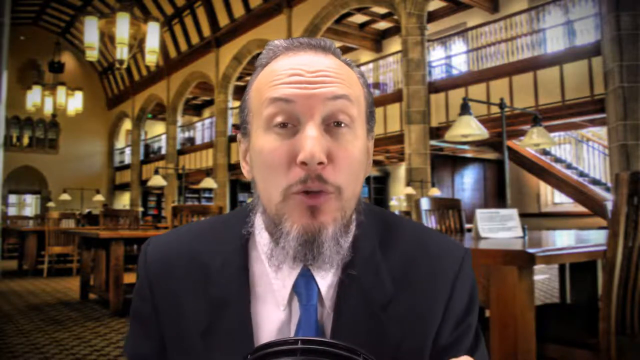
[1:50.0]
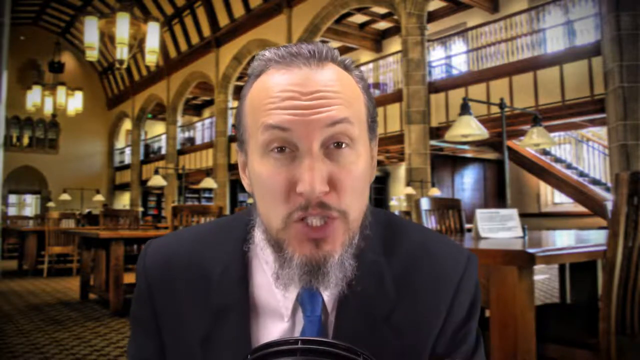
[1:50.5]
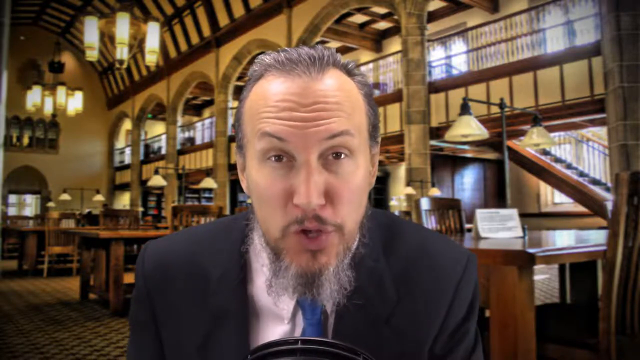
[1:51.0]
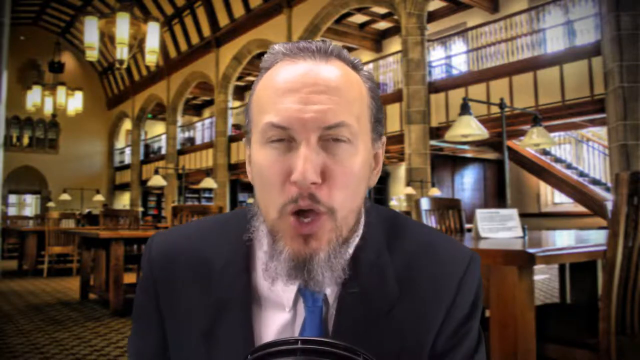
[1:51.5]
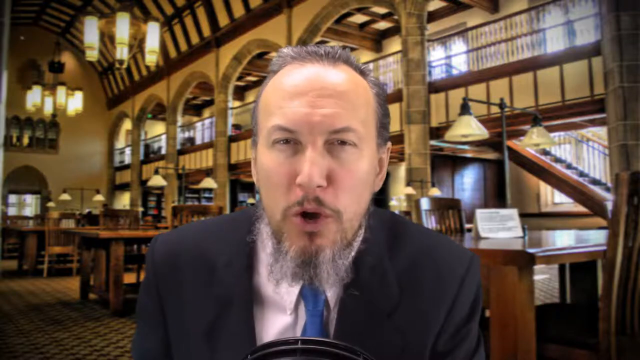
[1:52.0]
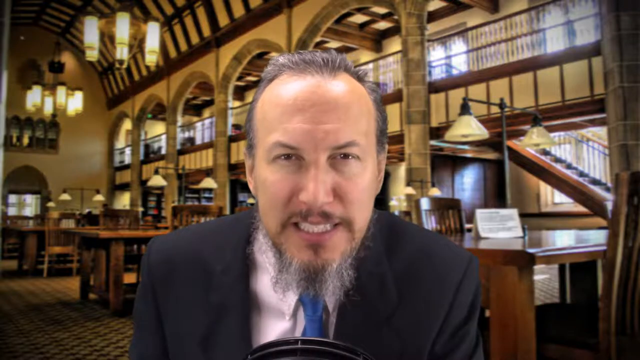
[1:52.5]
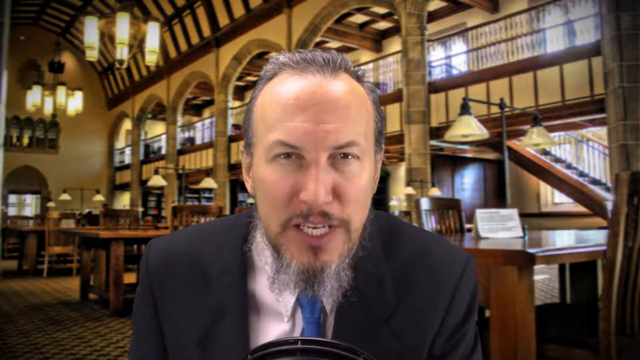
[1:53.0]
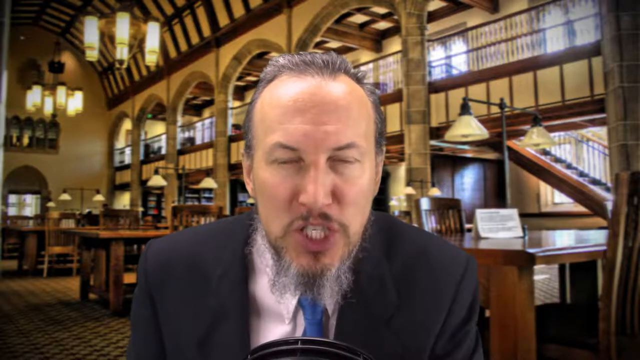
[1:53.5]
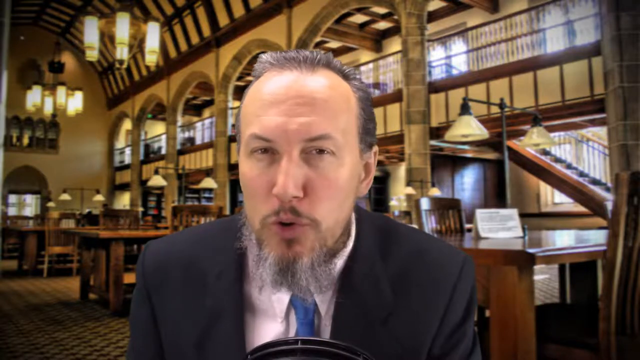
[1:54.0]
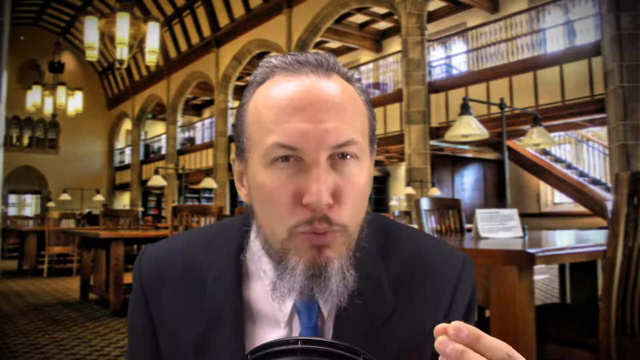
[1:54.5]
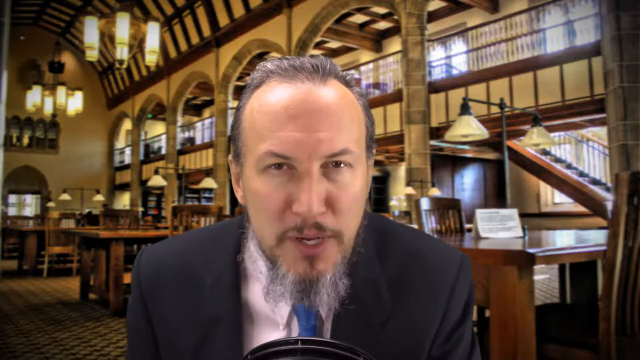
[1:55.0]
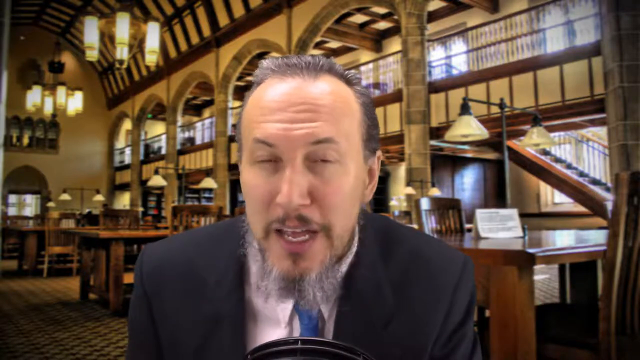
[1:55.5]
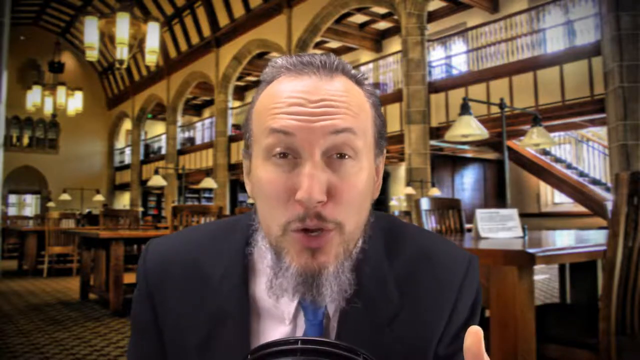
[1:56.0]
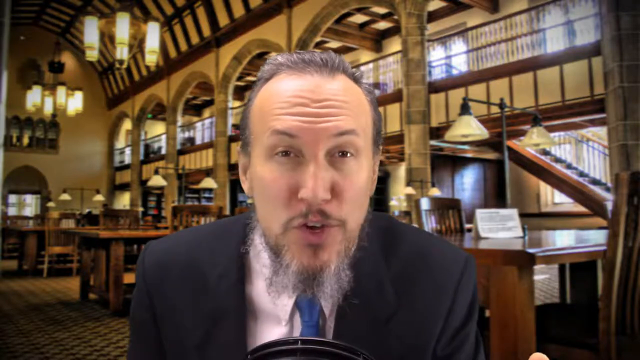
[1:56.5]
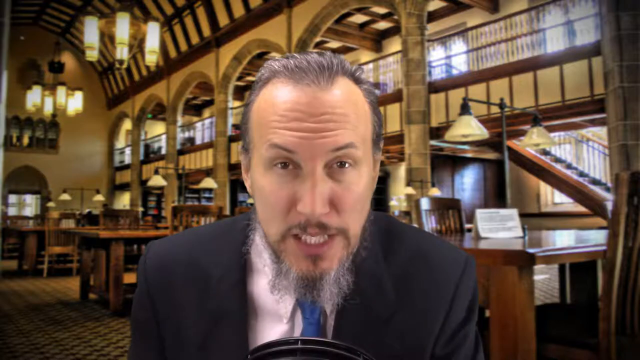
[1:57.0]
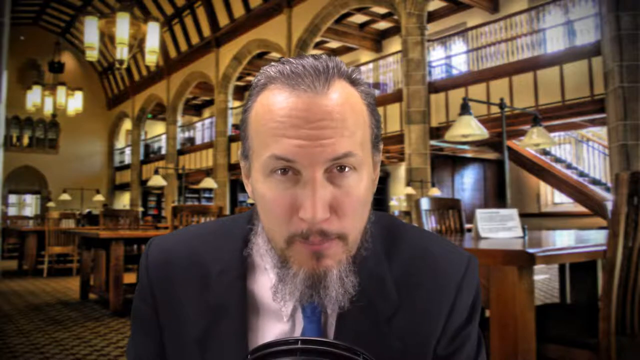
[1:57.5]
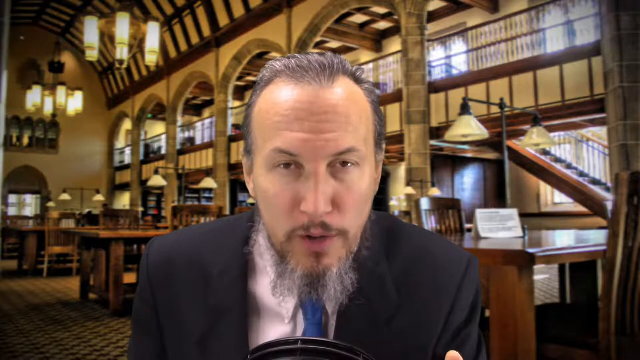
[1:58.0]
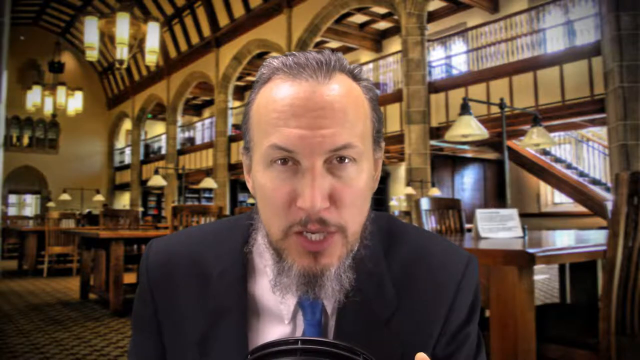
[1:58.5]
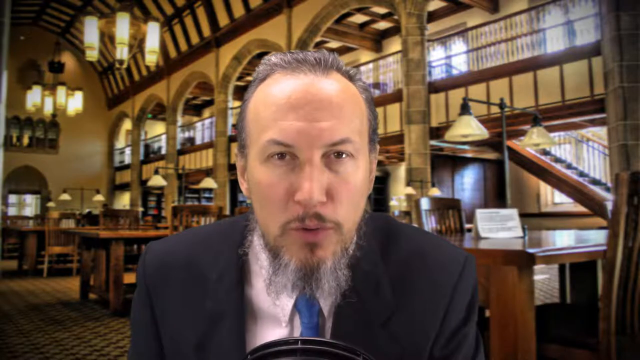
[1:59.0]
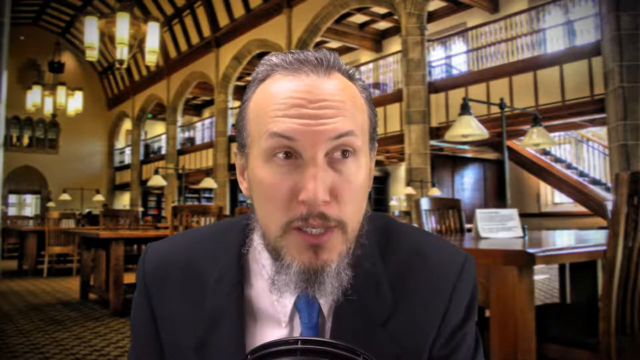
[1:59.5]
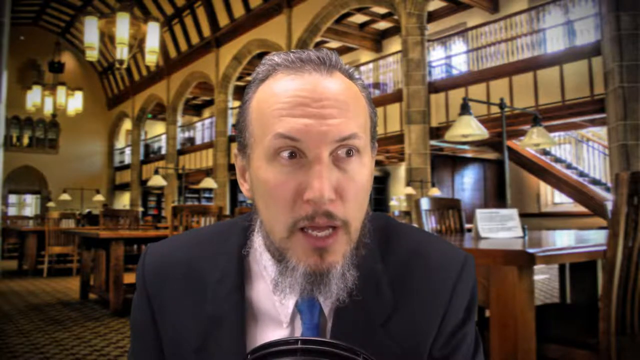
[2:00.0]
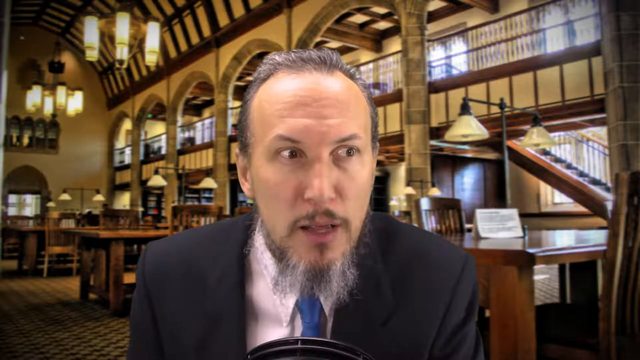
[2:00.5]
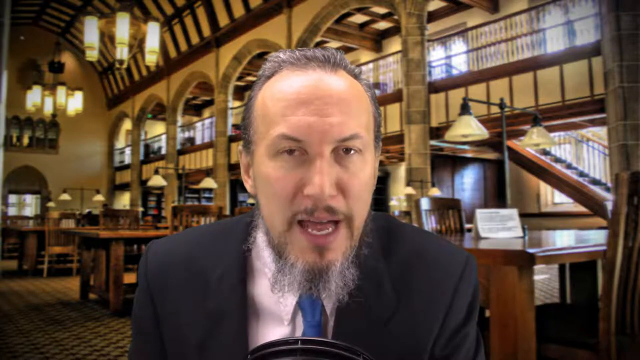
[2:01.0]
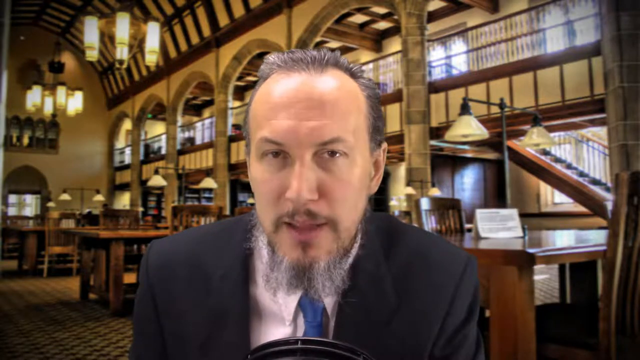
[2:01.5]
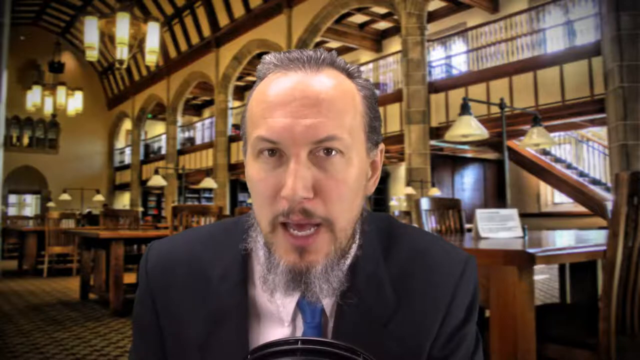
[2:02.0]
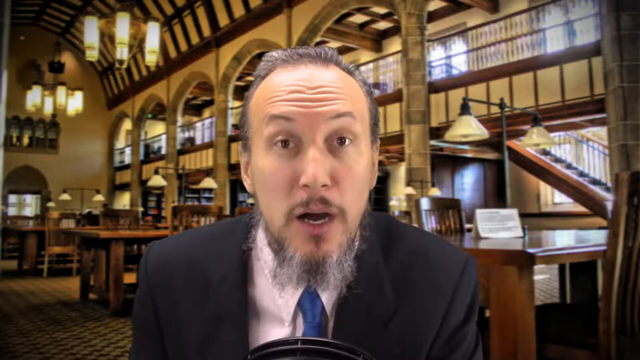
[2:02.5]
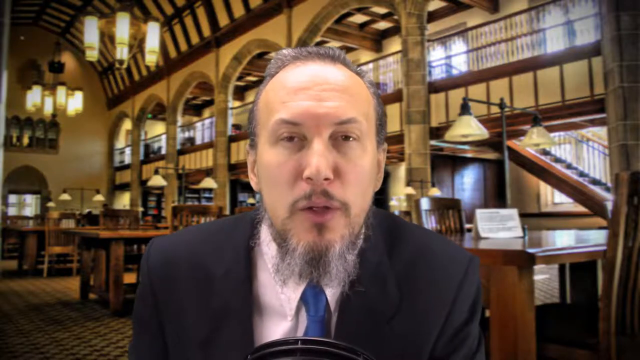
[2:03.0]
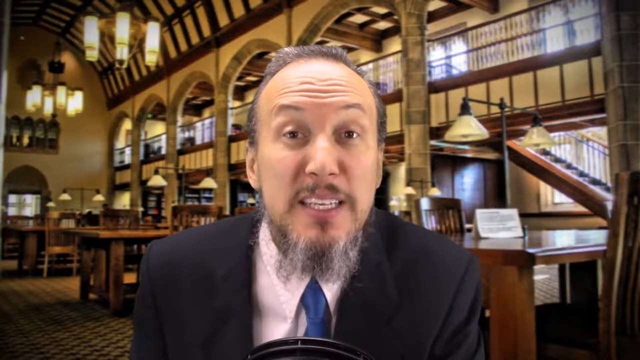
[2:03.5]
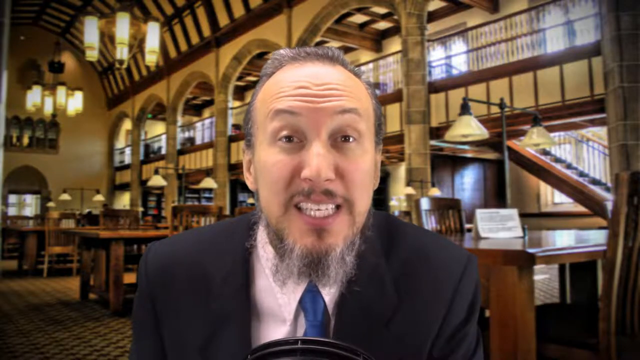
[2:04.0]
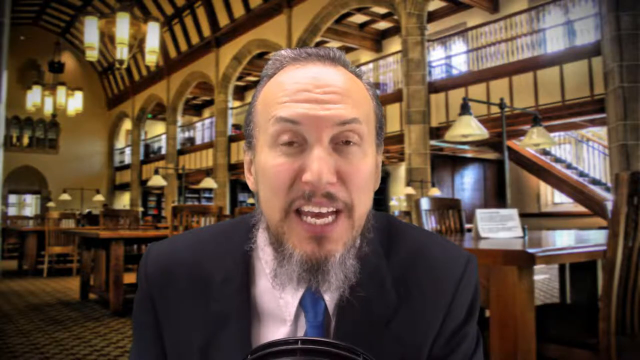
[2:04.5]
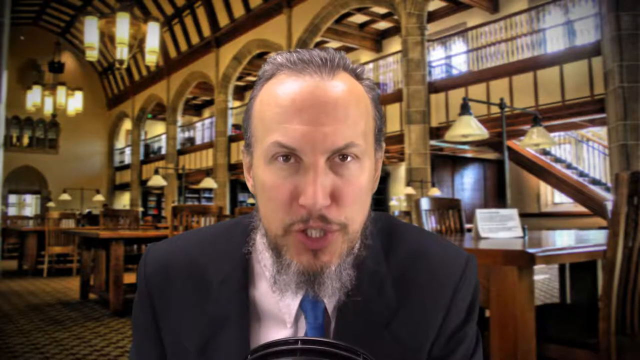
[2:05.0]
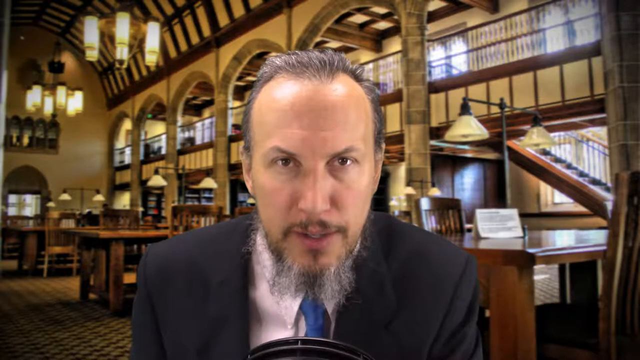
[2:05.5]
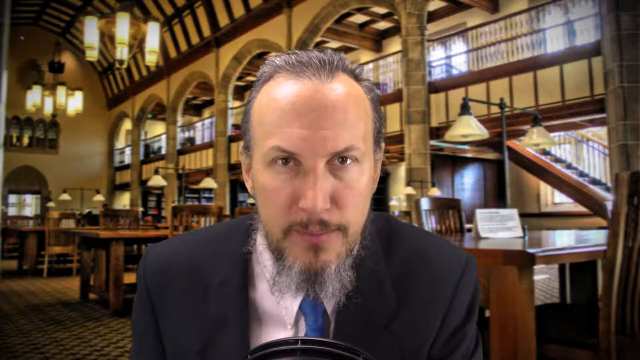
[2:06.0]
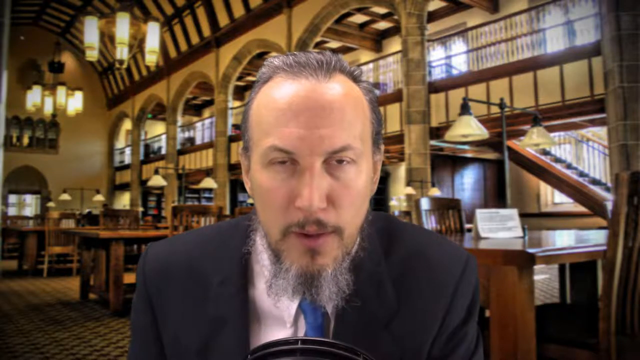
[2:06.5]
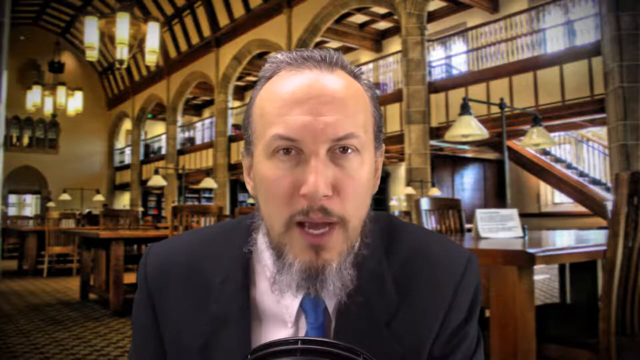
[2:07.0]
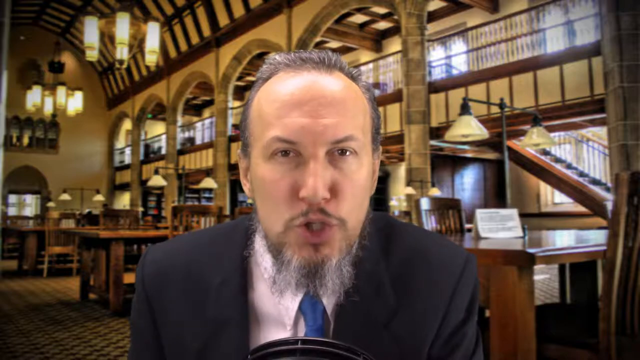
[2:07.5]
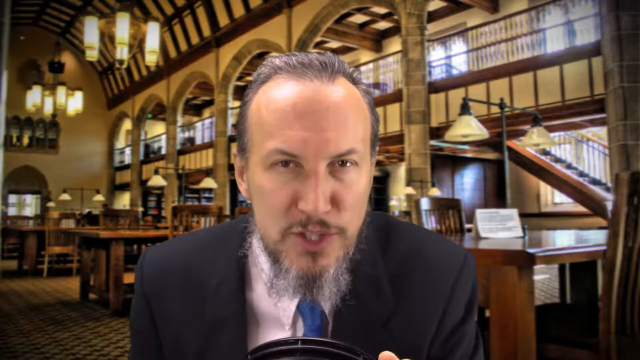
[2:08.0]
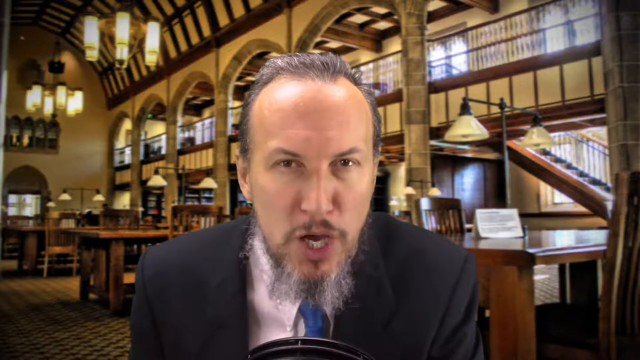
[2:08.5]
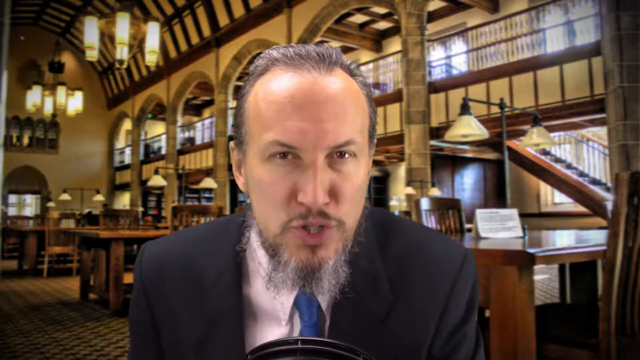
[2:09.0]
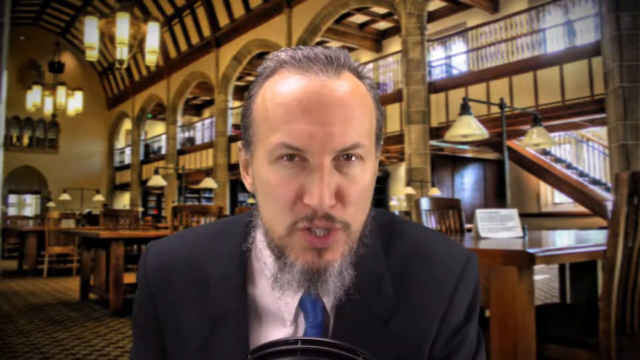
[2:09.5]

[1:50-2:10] Indoors in a two-story library, the view is face-to-face with a man dressed professionally in a dark suit, a white collared shirt and a dark matching tie. He is Caucasian, an older gentleman, perhaps in his early 50s, and speaks intensely and animatedly toward the camera. He makes many expressions, from pursed, closed lips and raised eyebrows to a sudden baring of his teeth, pulling his face backward with his eyebrows lifted. He stresses his points primarily with his left hand, of which only the fingertips are visible coming up and down. He then looks off a little to his left, as if in surprise. When he lifts his eyebrows, a few lines emerge on his forehead. The scene is in daytime, with daylight coming through the many windows lining the second floor beyond the balcony.